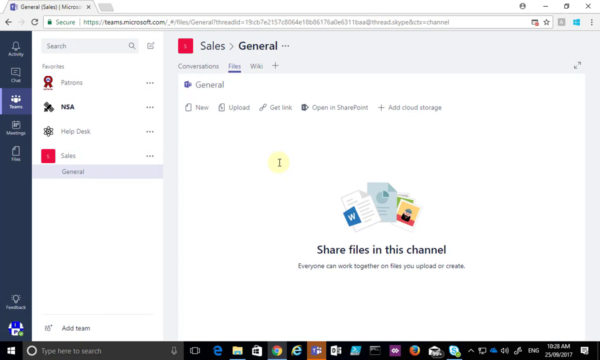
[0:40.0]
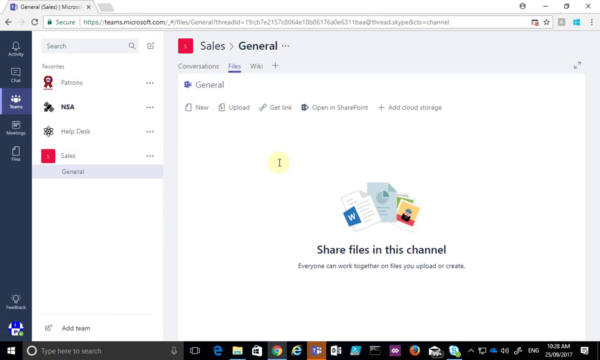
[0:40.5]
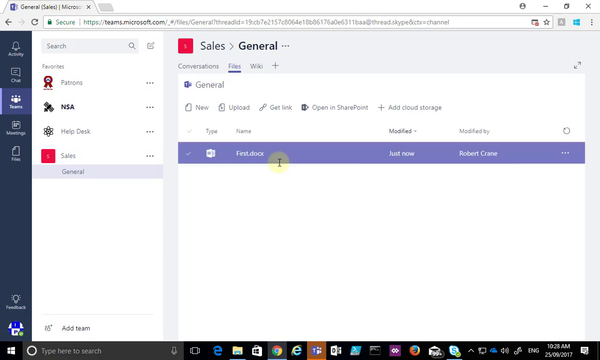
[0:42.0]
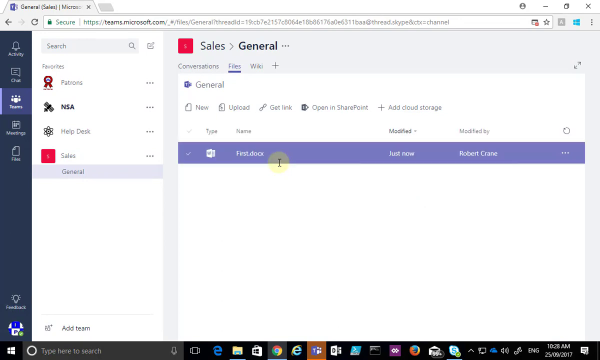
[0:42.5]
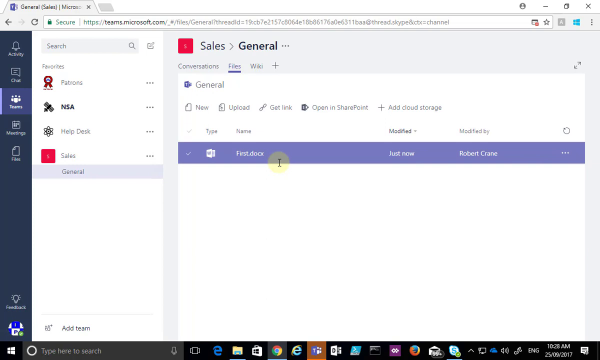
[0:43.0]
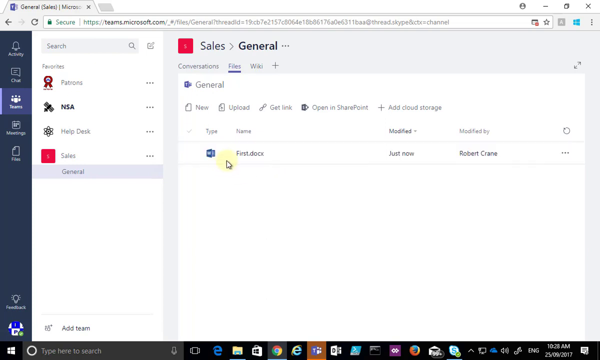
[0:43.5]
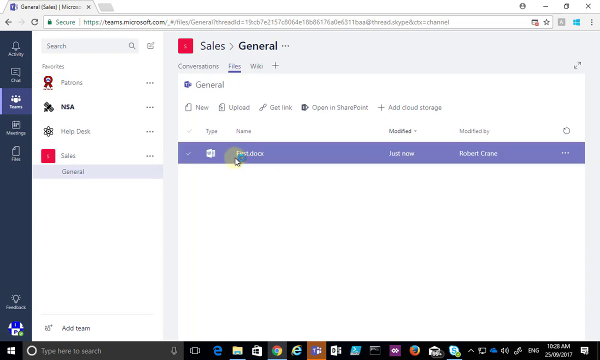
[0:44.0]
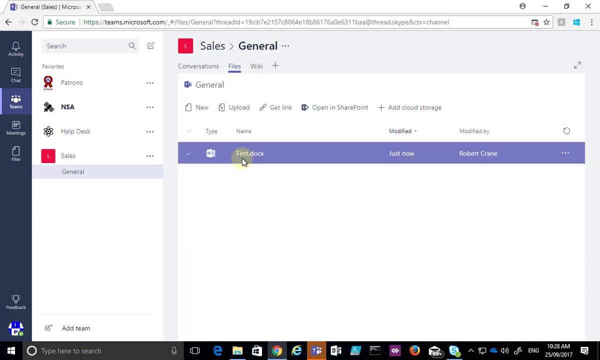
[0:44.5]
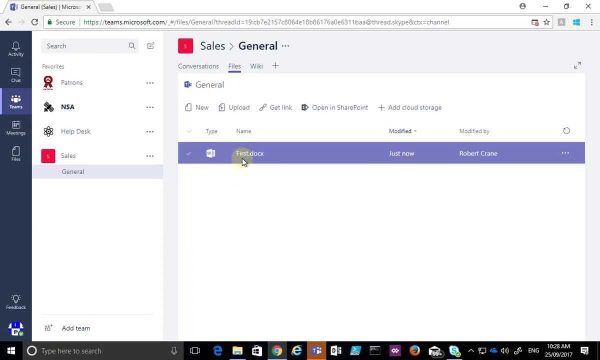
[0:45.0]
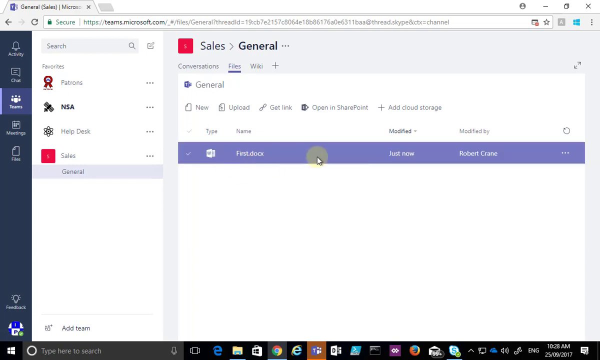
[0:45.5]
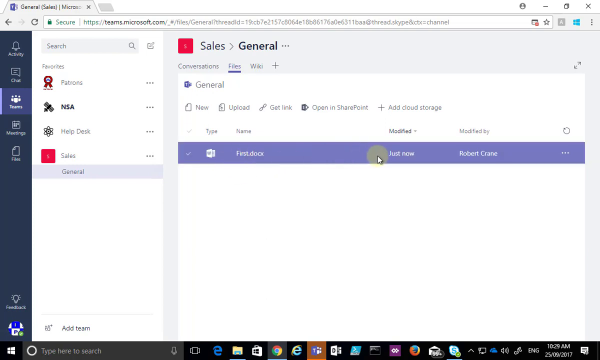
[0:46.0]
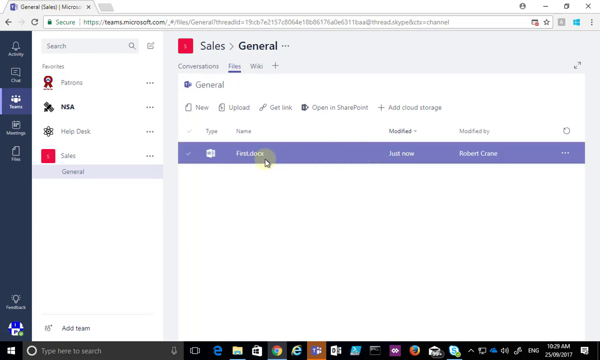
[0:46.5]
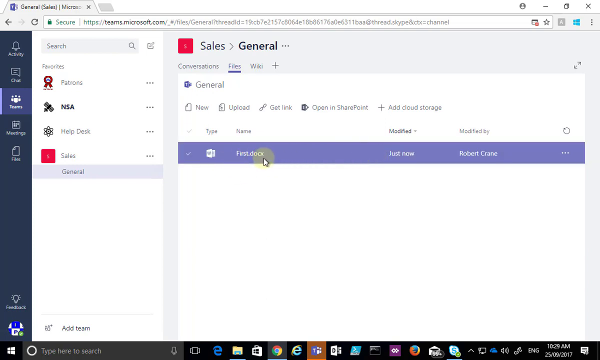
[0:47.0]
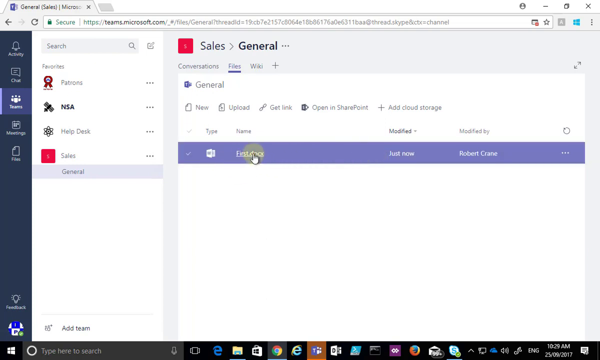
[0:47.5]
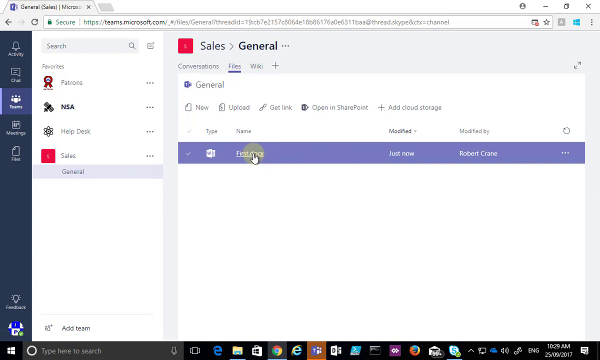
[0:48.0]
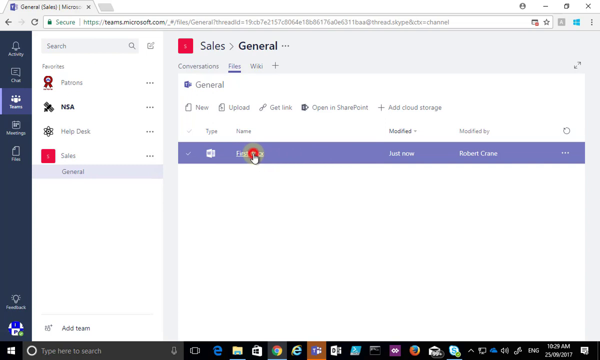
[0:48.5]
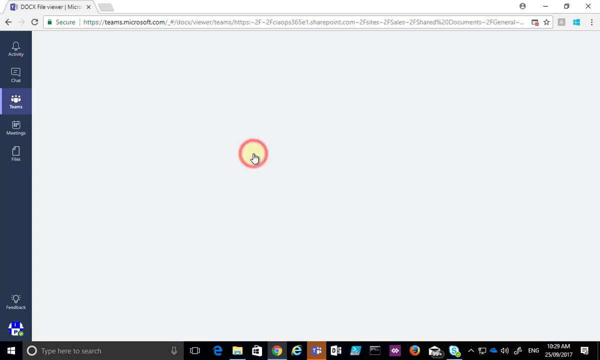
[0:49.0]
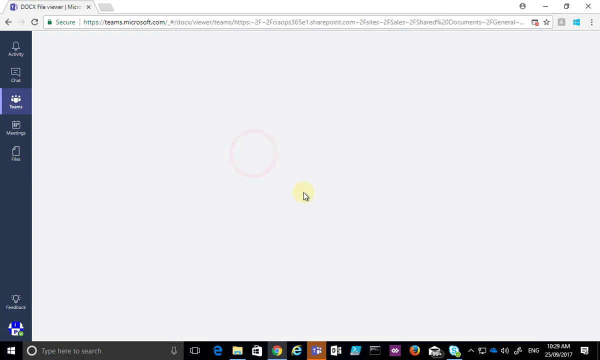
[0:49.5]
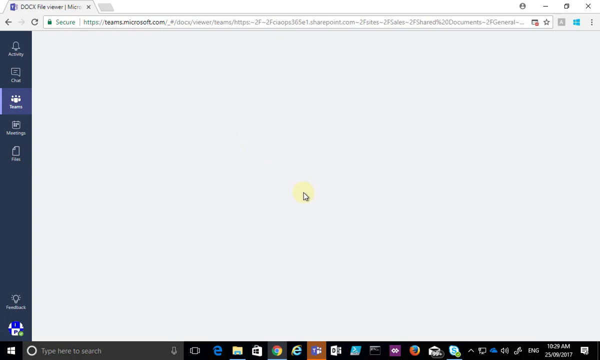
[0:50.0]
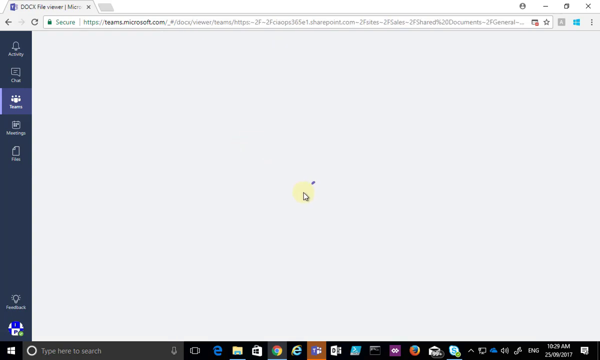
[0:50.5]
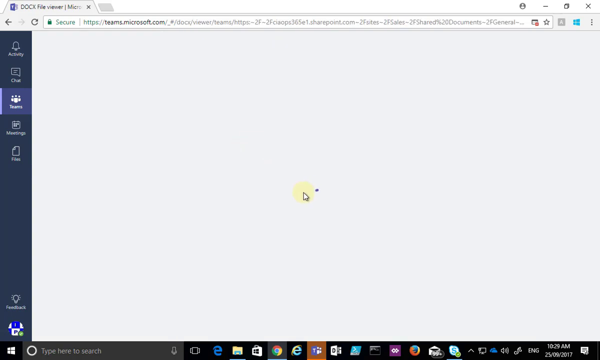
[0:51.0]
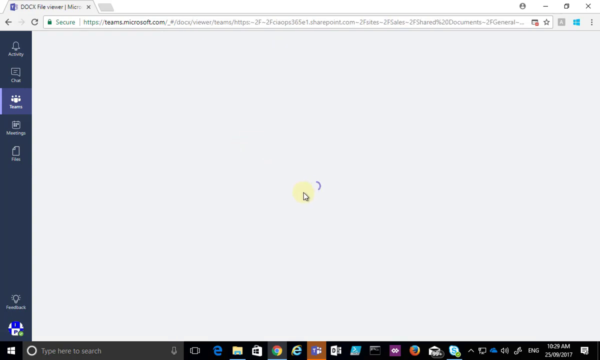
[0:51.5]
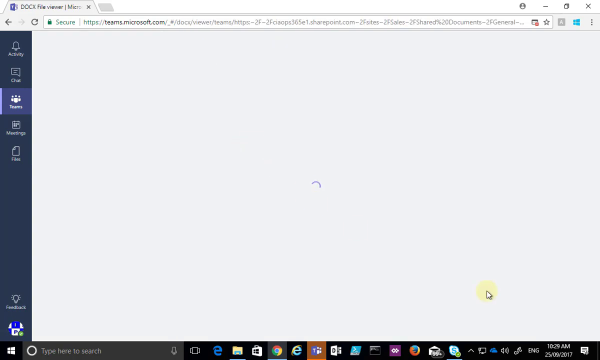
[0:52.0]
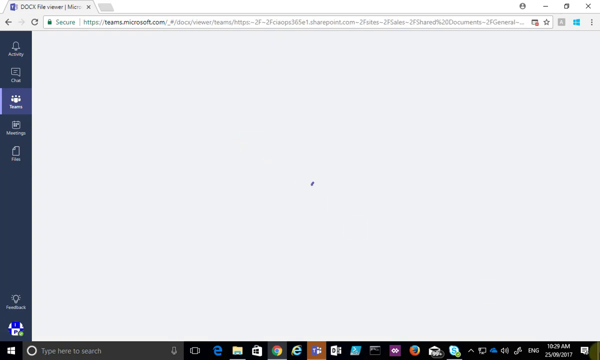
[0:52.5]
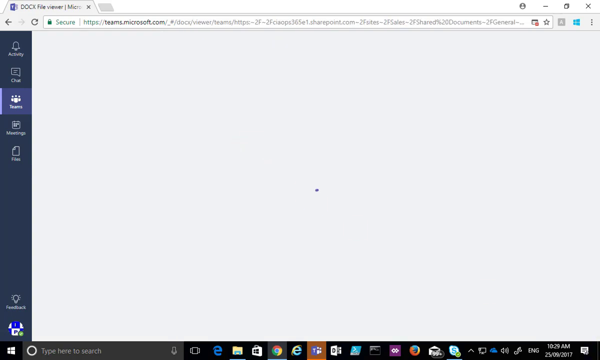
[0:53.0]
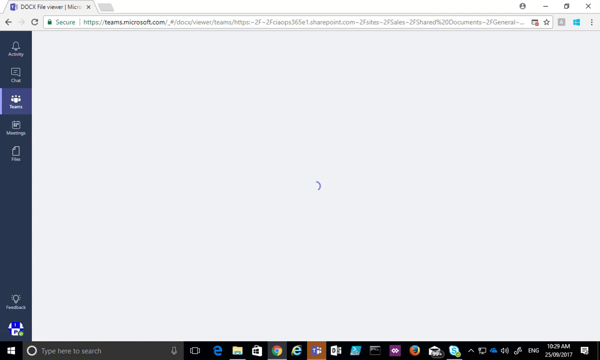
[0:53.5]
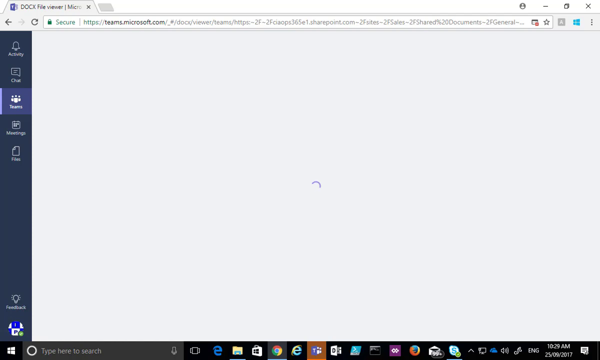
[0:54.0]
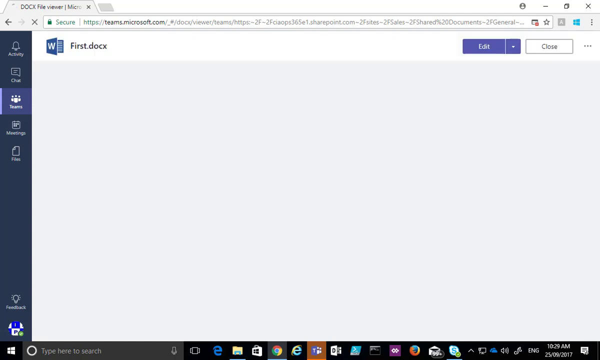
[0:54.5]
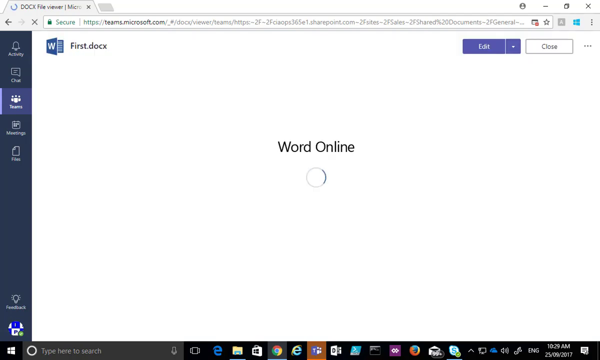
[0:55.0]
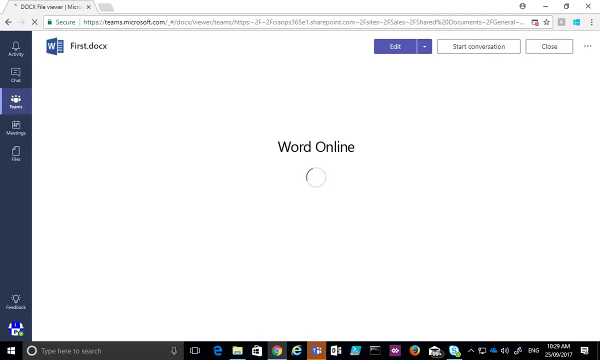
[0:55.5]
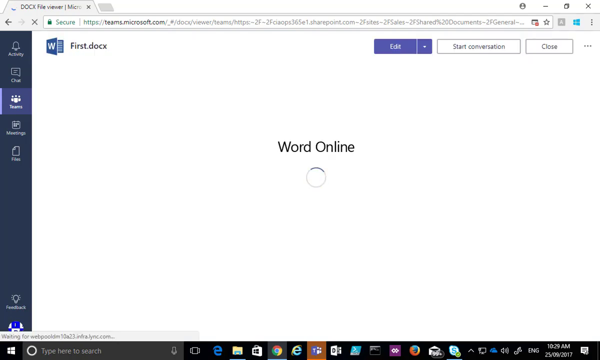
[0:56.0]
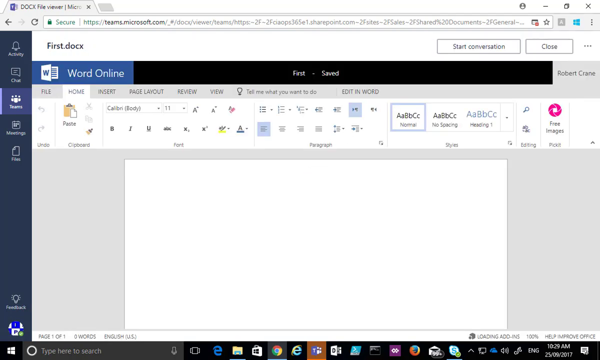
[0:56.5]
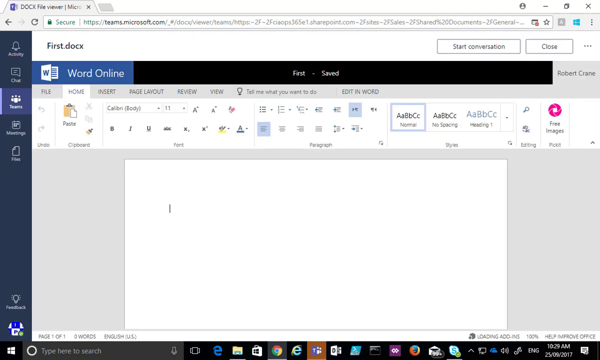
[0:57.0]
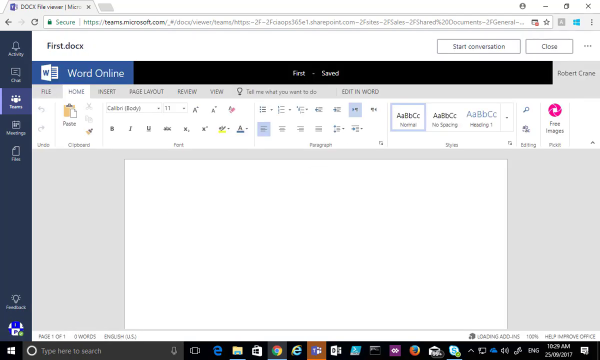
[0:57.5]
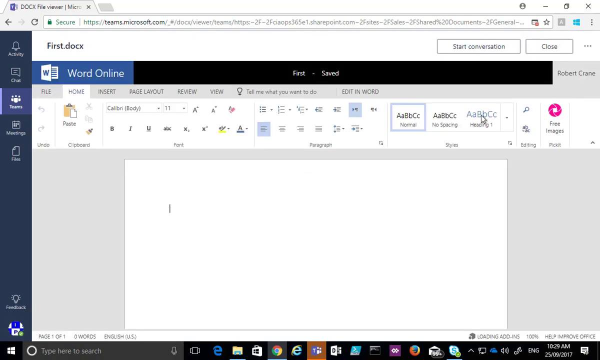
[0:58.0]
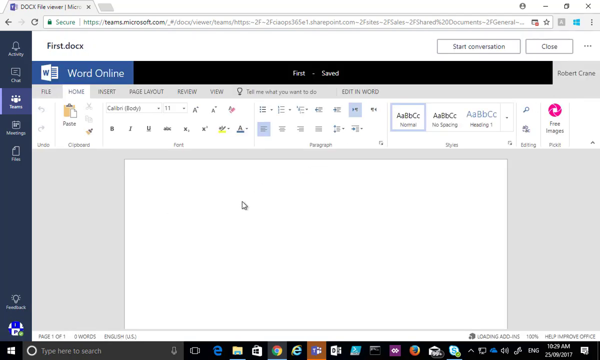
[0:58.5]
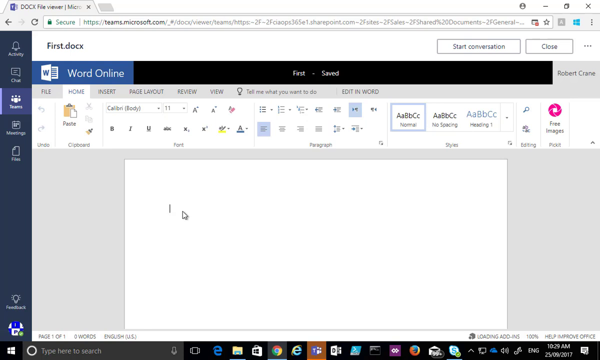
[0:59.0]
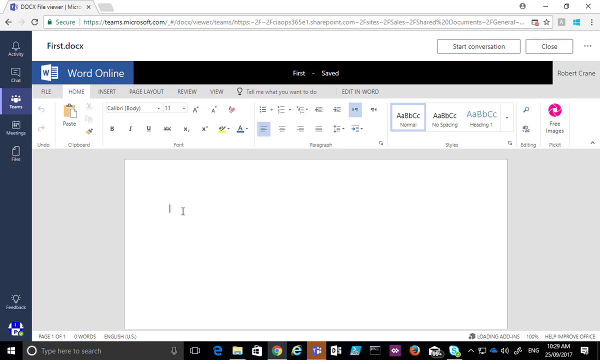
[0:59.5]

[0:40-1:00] The Sales General page shows General, with "New," "Upload," "Get link," "Open in SharePoint" and "Add cloud storage," and the share files in this channel area. The newly created document now appears on this screen, shared to the page. The document is selected and opens, ready to be typed into.